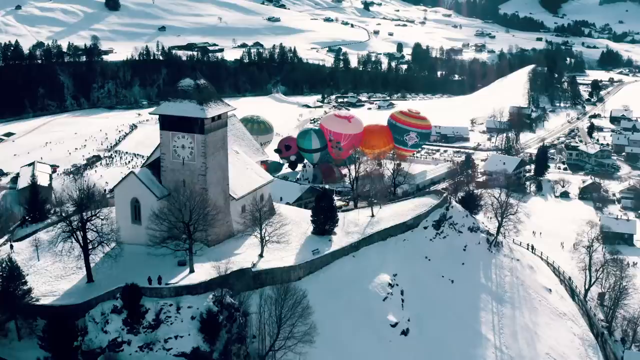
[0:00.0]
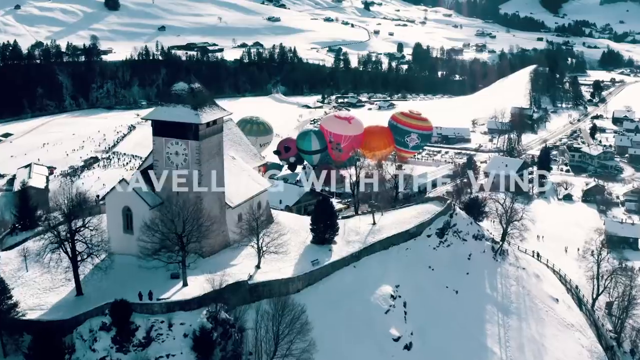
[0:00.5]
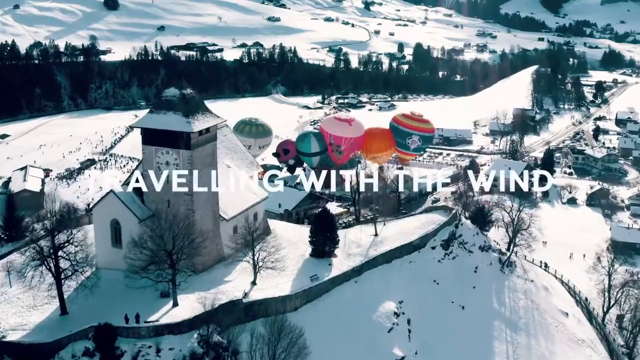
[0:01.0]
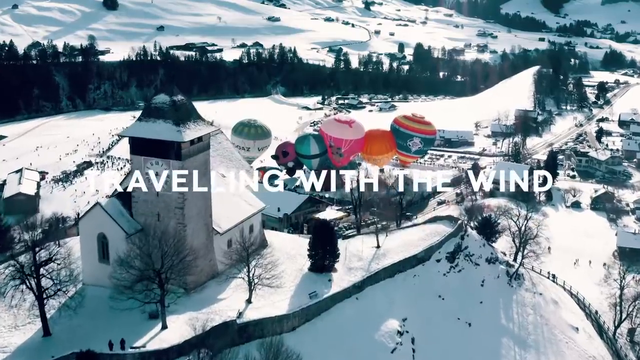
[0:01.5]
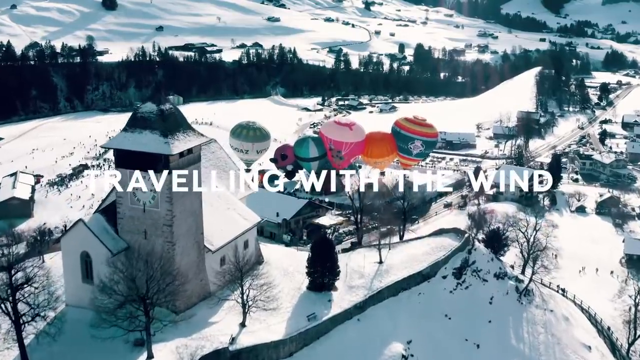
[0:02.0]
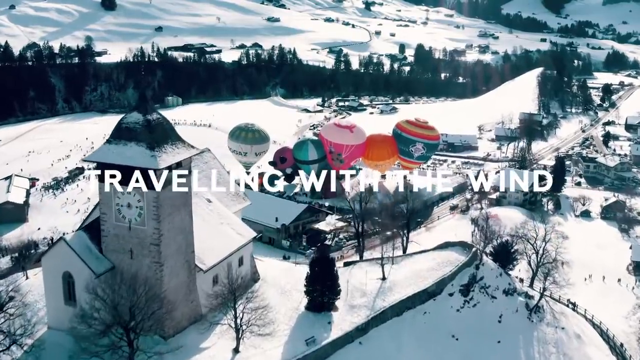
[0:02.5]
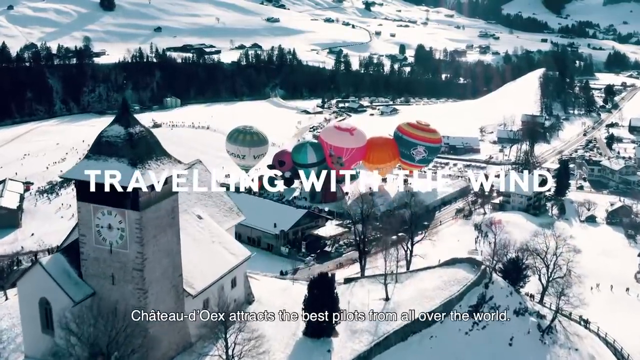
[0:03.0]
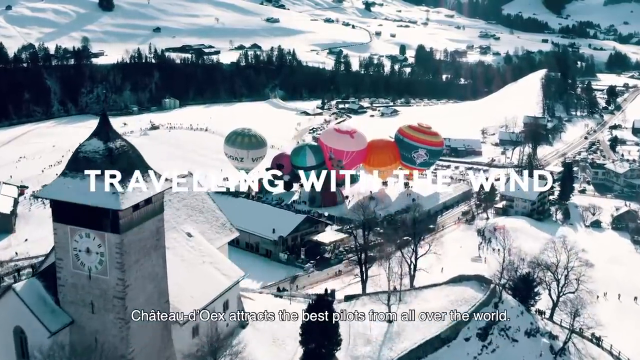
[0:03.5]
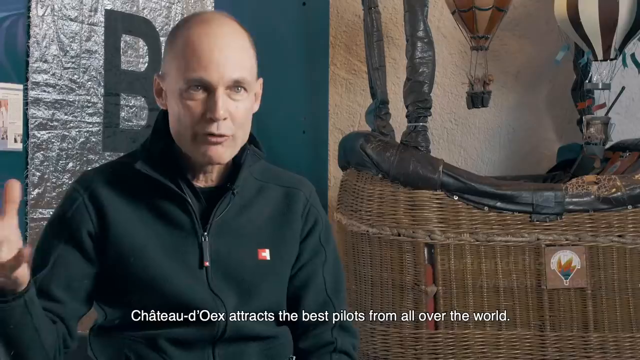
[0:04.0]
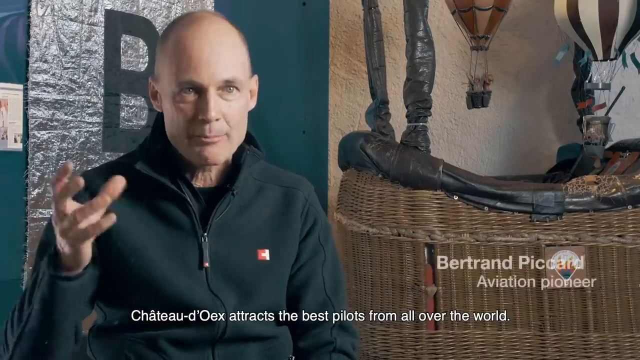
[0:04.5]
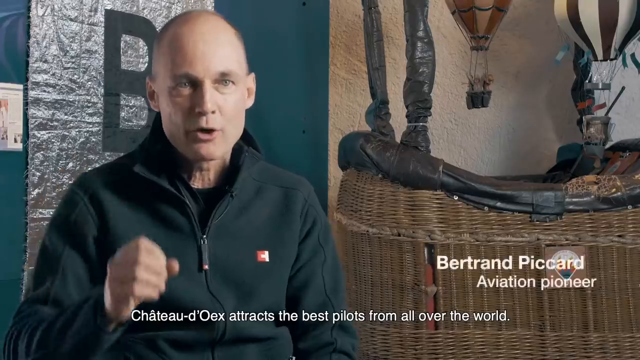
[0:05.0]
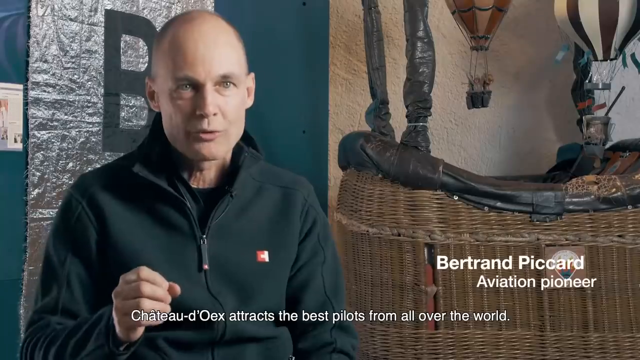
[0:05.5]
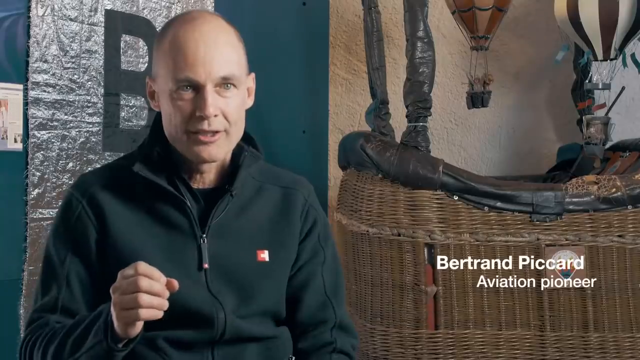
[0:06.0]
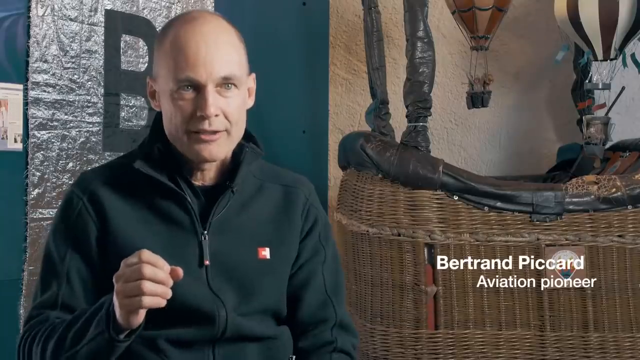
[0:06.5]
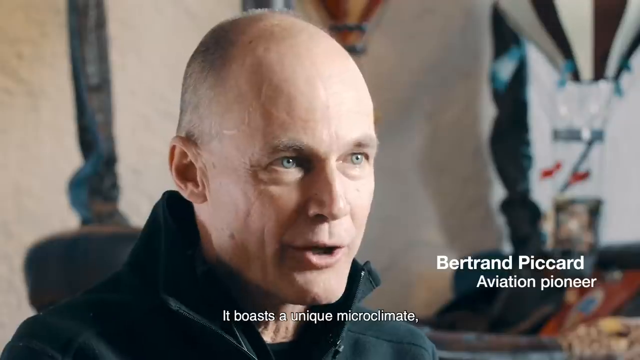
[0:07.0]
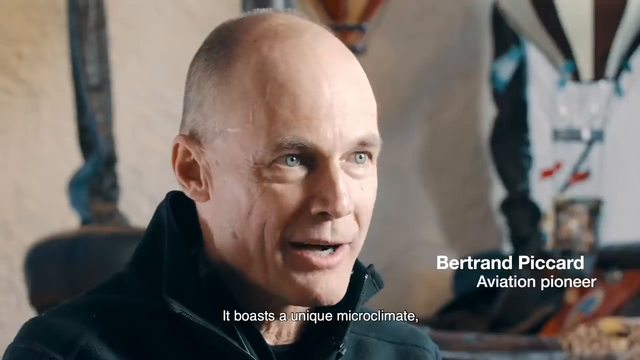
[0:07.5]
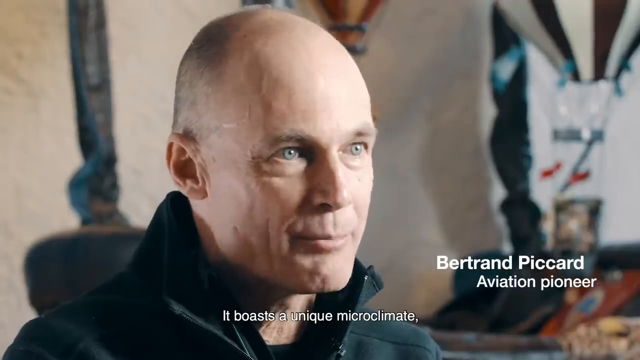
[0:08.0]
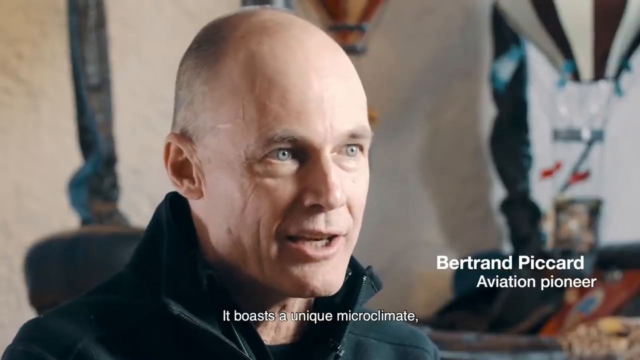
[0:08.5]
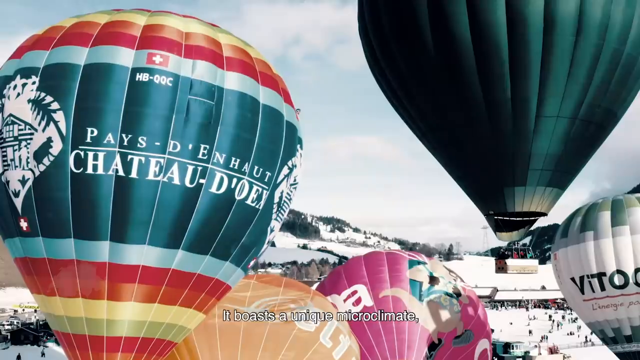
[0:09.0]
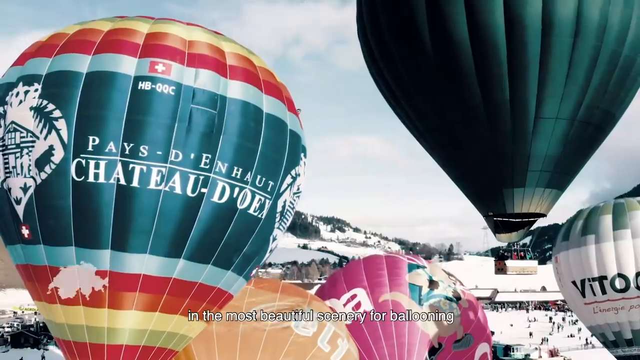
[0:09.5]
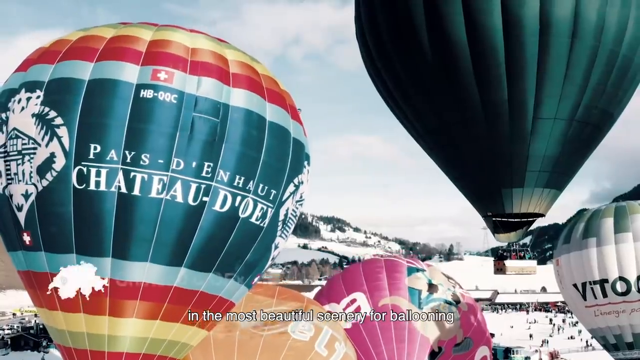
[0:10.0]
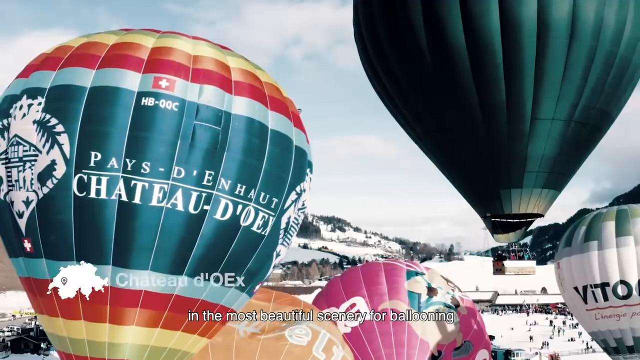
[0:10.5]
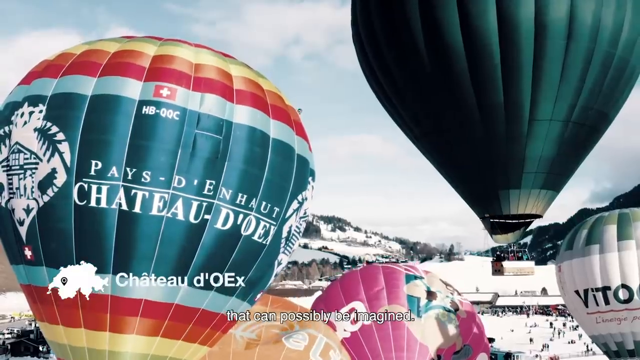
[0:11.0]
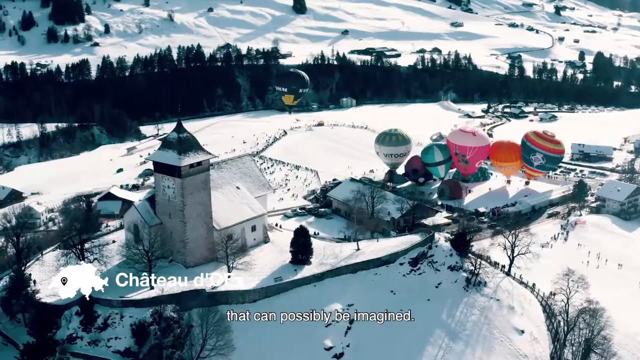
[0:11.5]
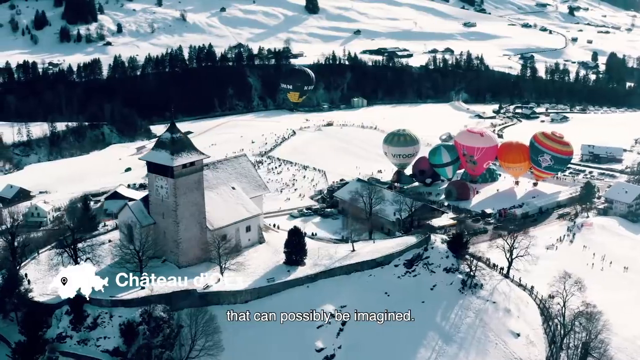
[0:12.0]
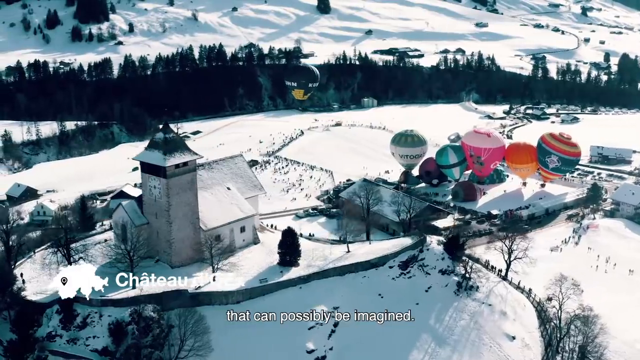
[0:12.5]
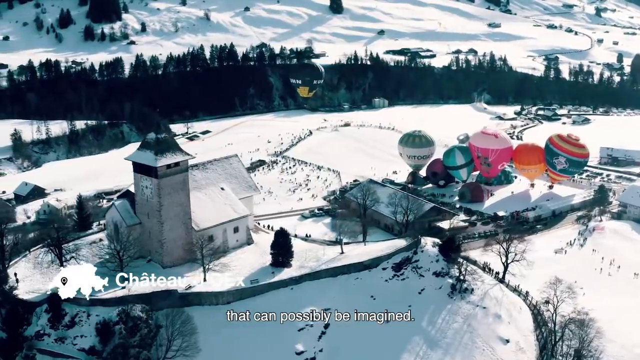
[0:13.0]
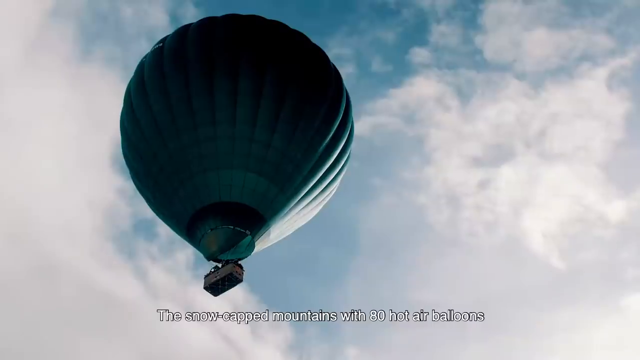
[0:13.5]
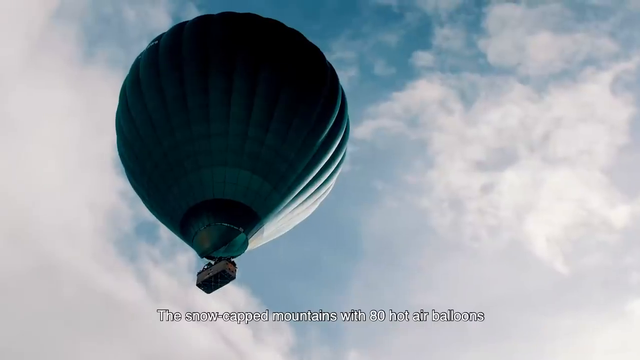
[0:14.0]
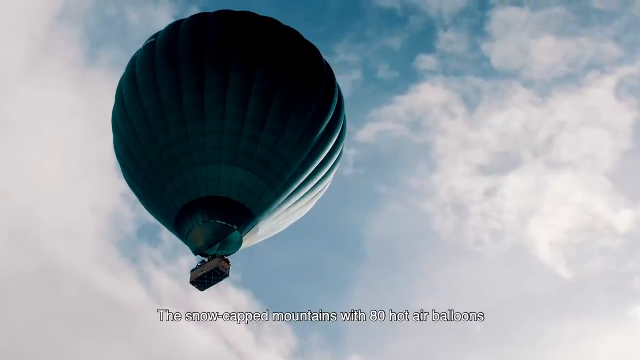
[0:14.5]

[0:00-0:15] Text that appears to read "traveling with the wind" is in white font in the center of the screen. The setting seems to be a travel destination: a very snowy, mountainous region with some old-looking buildings, and a bunch of different colored hot air balloons in the center of what is apparently a little village. The camera does a kind of 180, circling around the village, and some cars and people are visible. A bald man in a winter fleece jacket is talking, and on-screen text gives his name: "Bertrand Picard, aviation pioneer." The hot air balloons are then shown really close up, and finally one of them is mid-air, going up into the sky. The video goes back and forth between the man talking and the hot air balloons going up. It is perhaps some kind of advertisement for a hot air balloon destination in a remote, snowy, mountain setting.